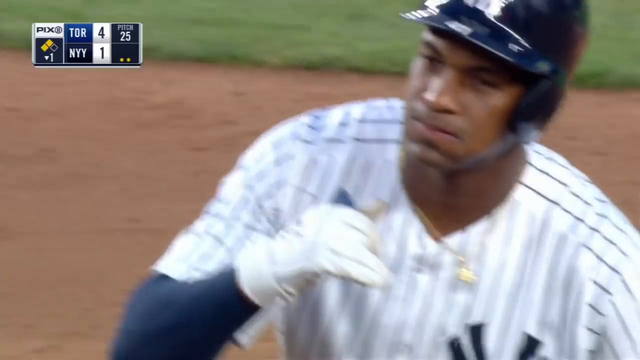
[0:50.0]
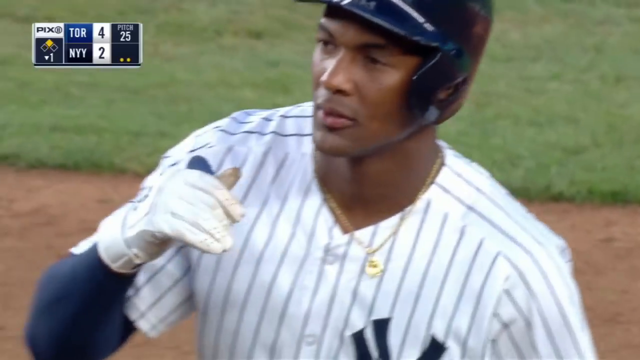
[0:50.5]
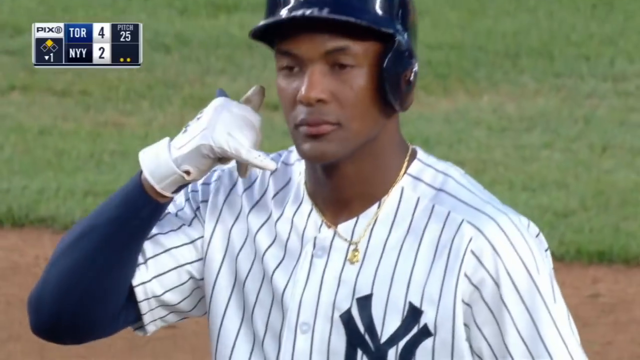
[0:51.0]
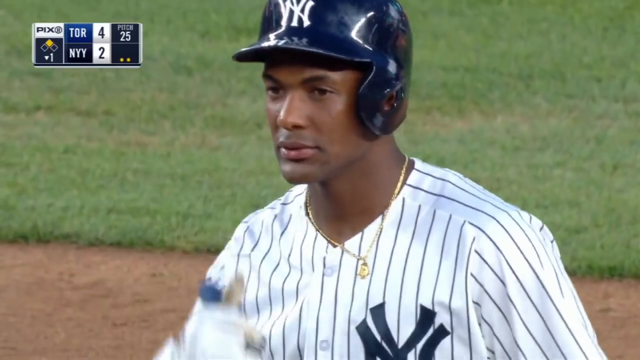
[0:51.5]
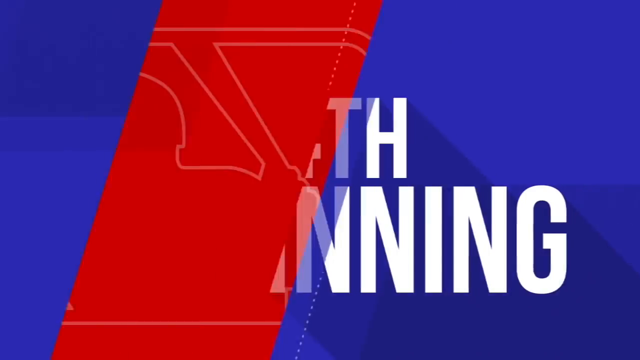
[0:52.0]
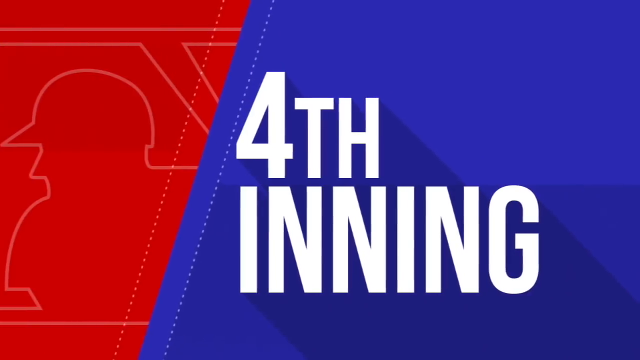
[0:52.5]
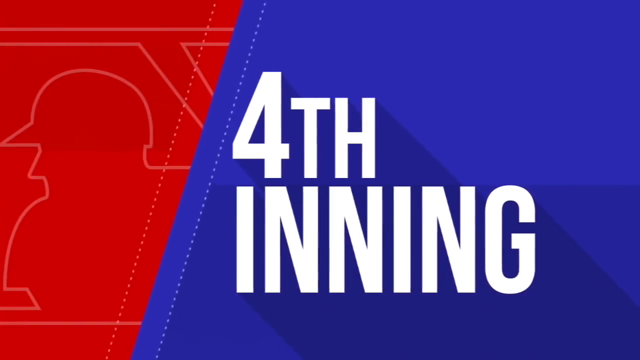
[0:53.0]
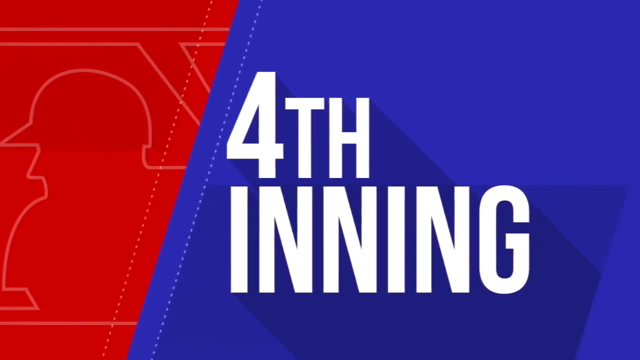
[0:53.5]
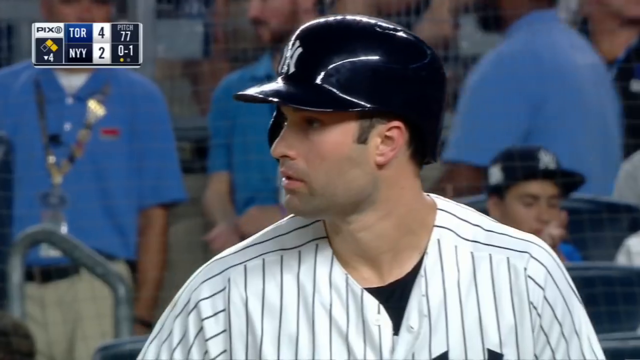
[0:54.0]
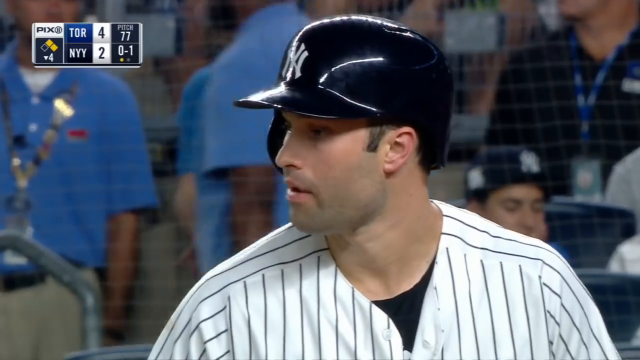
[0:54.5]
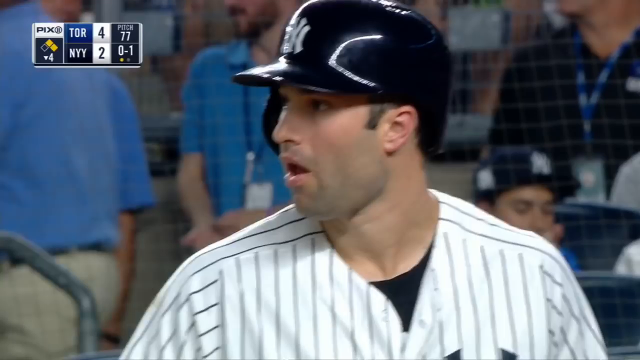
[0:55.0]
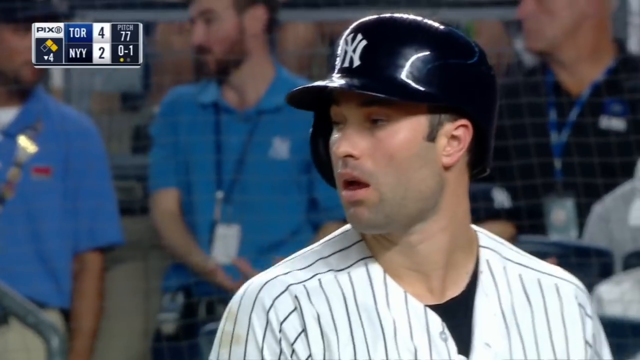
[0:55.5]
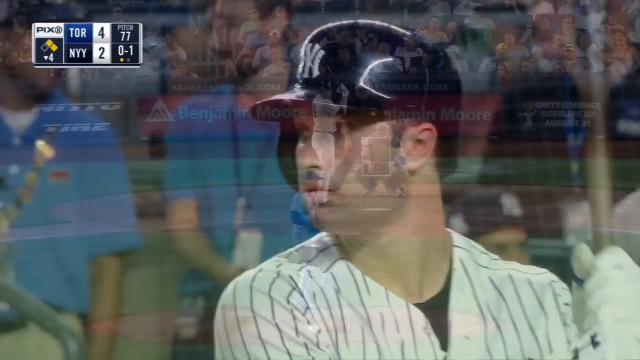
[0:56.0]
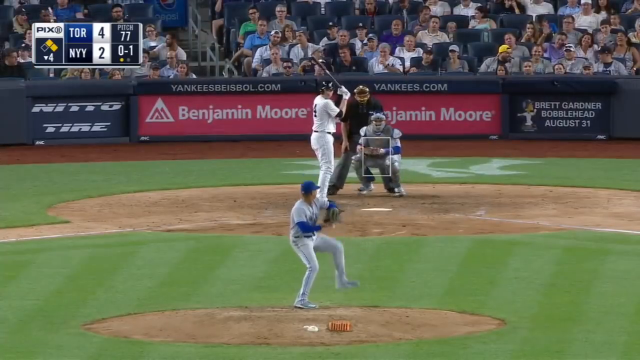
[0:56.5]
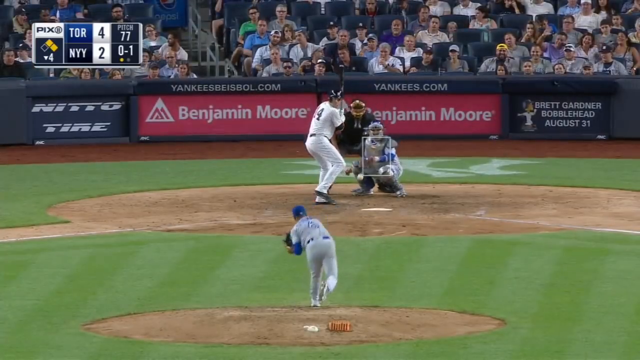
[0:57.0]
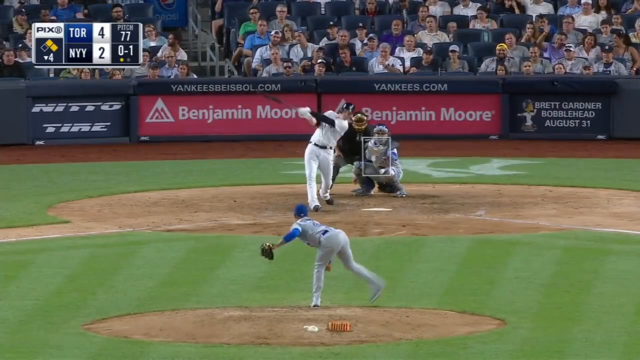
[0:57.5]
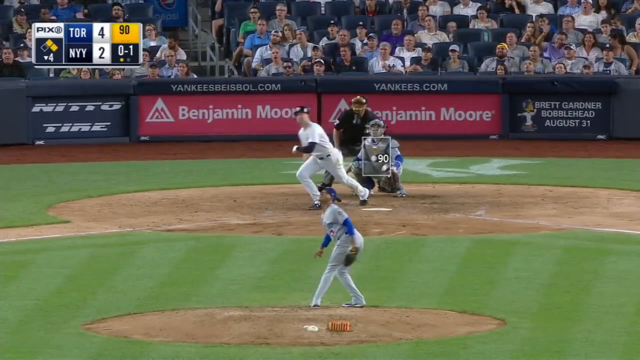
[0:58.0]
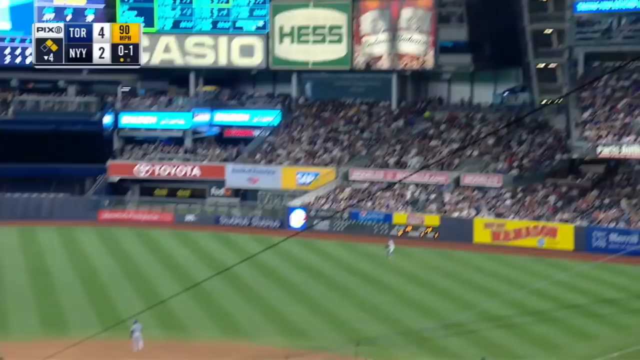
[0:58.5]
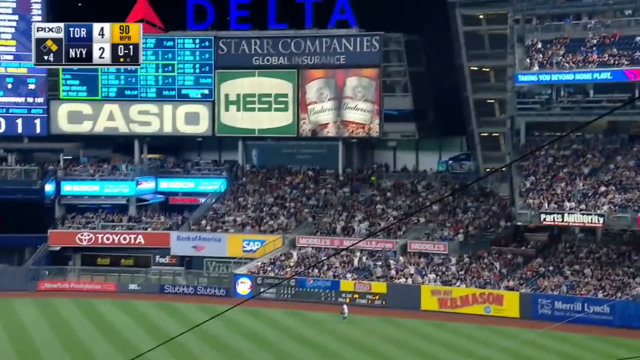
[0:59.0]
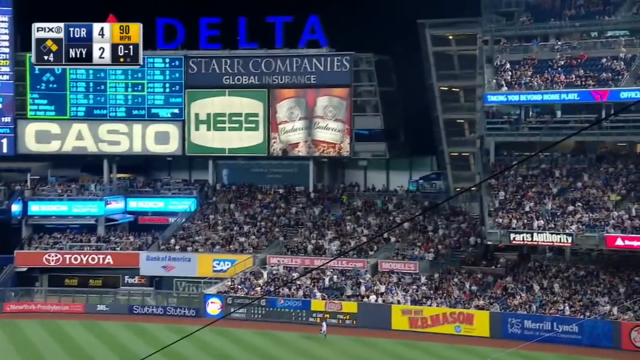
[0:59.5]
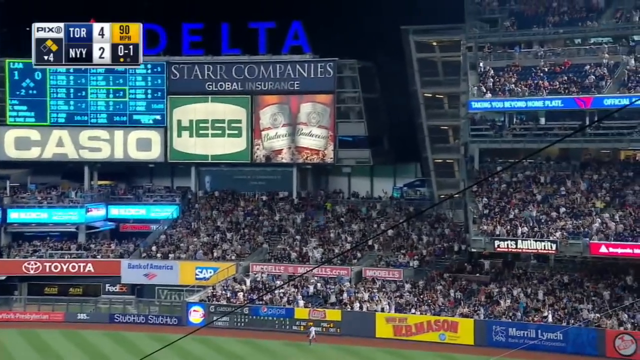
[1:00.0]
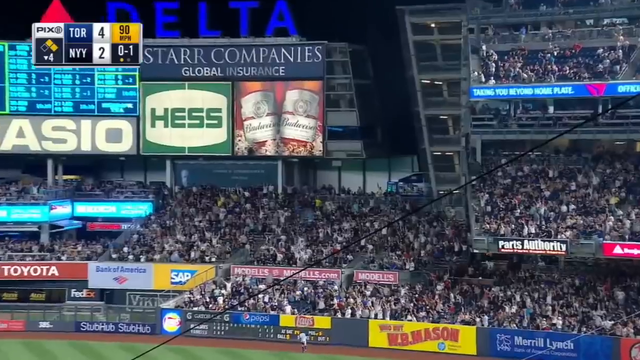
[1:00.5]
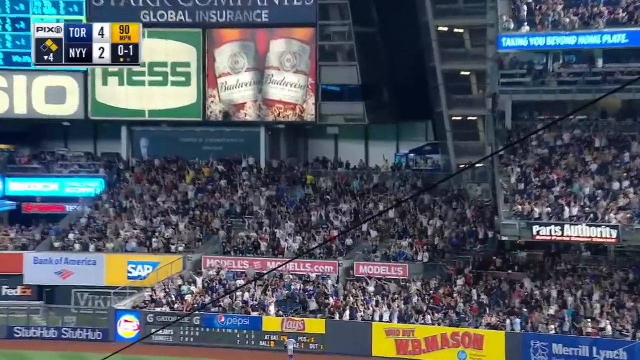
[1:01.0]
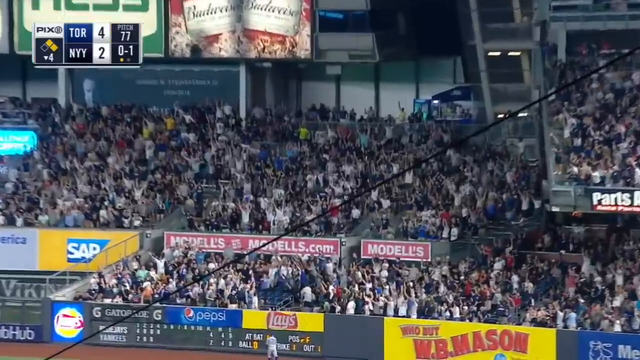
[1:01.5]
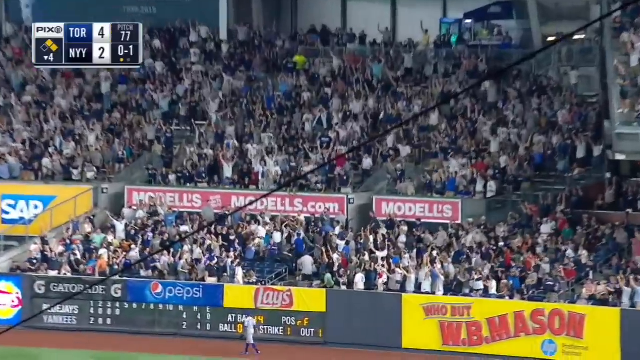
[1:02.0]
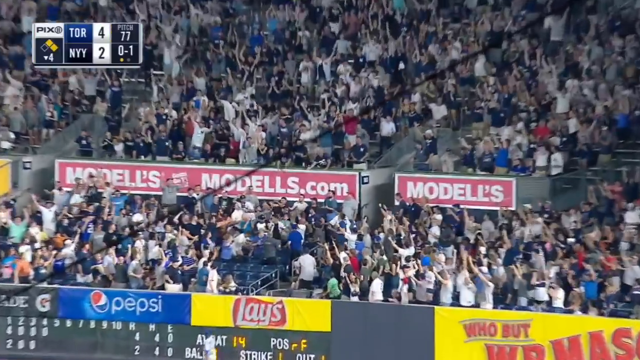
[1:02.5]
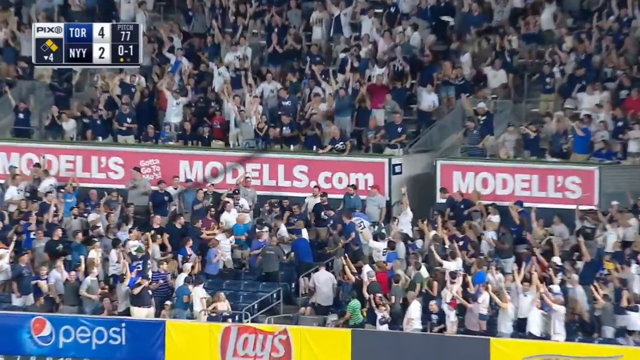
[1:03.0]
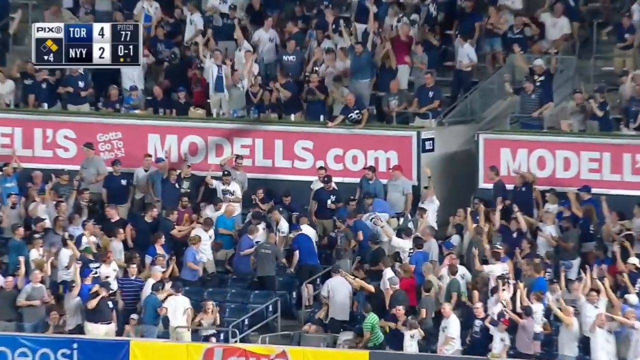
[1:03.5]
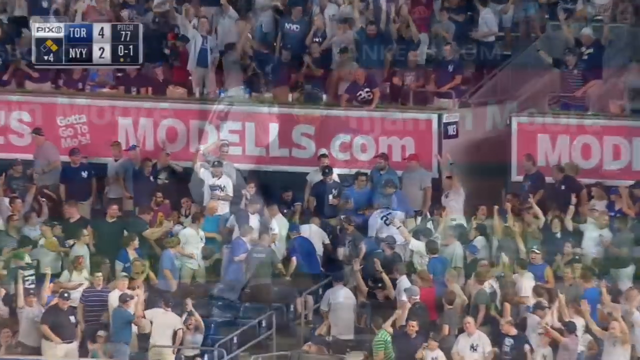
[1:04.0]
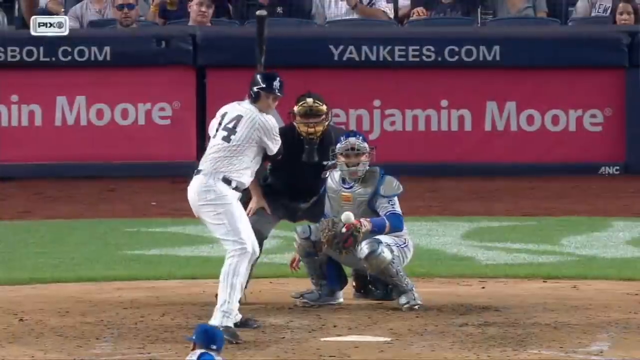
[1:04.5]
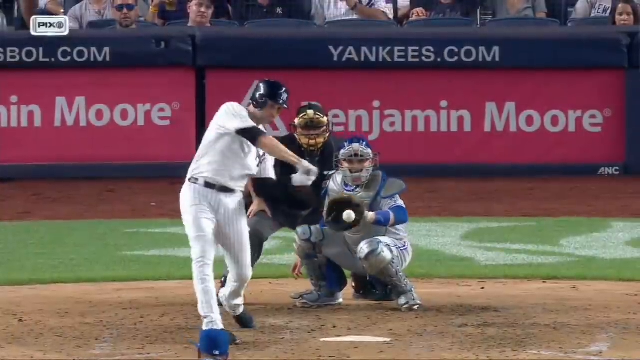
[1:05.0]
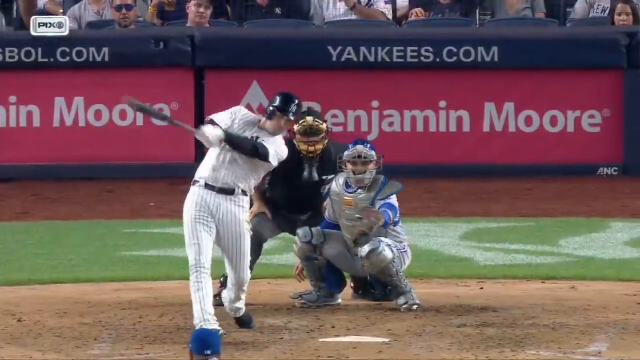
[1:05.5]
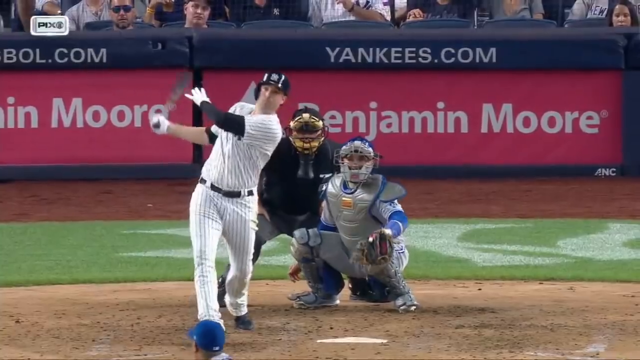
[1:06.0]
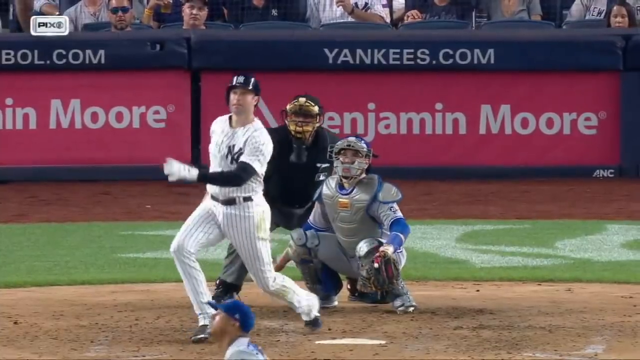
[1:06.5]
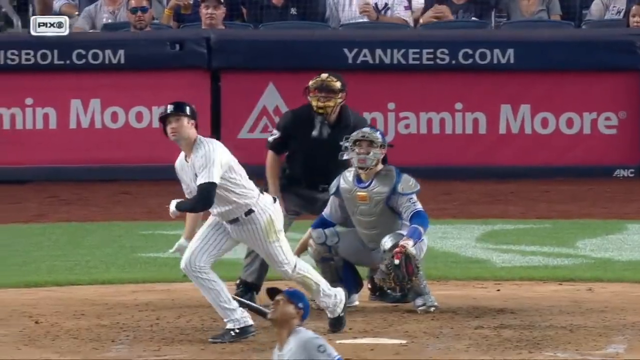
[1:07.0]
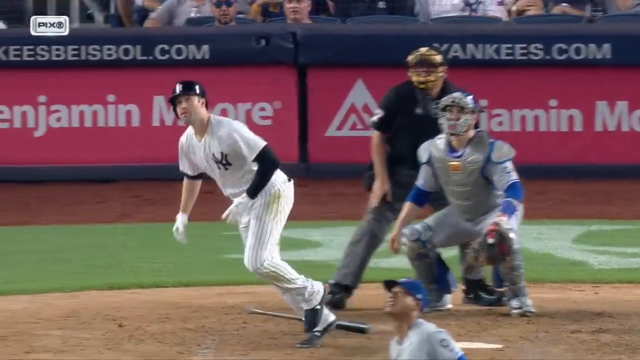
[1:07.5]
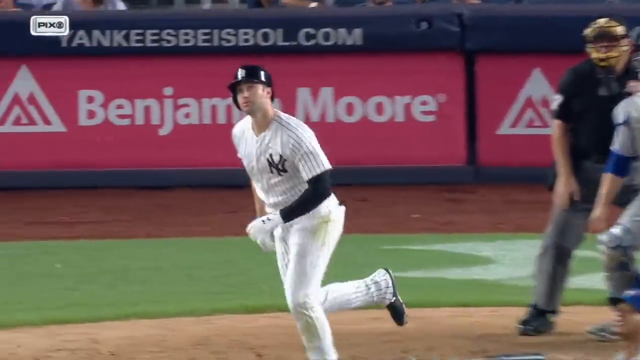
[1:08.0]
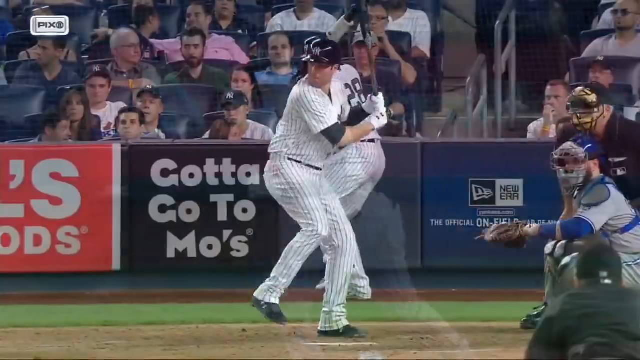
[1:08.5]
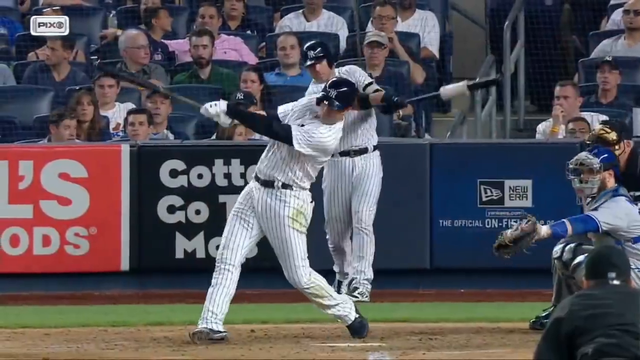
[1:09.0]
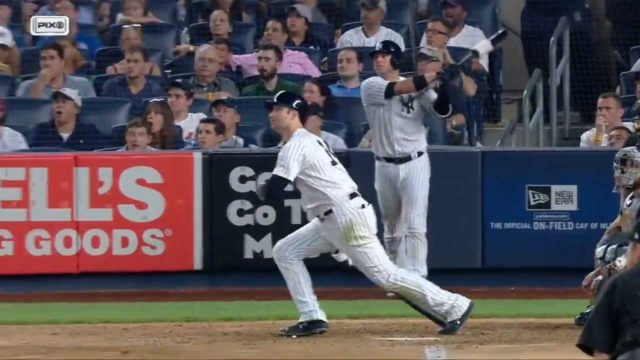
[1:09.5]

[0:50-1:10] A new New York Yankees batter stands at the batting position on the diamond; he appears to be the gum-chewing man from the beginning of the video. He wears his Yankees uniform, and all the players wear a hard version of the New York Yankees baseball cap with a protective section down one side. He adopts his stance ready to receive the pitch, his bat pointing to the right of the screen. This is in the fourth inning. The batter strikes the ball very well, sending it high into the sky, over the perimeter boards and into the crowd, where a very happy, cheering spectator catches it.